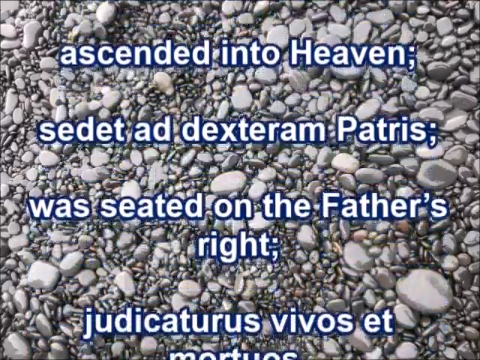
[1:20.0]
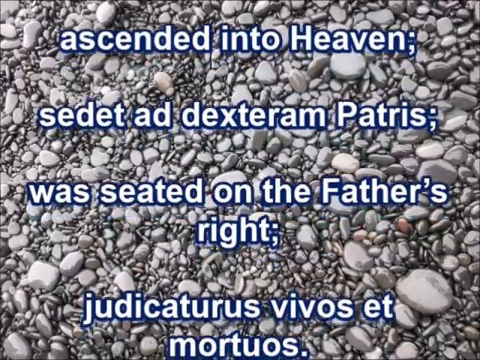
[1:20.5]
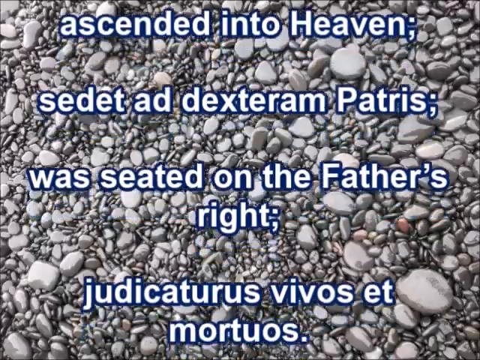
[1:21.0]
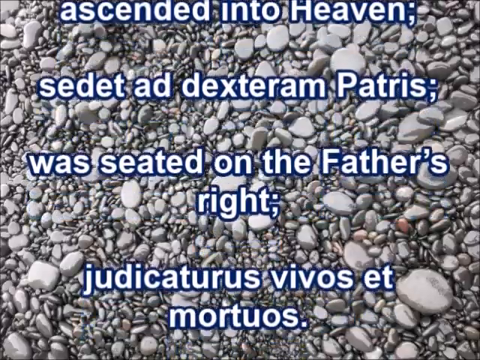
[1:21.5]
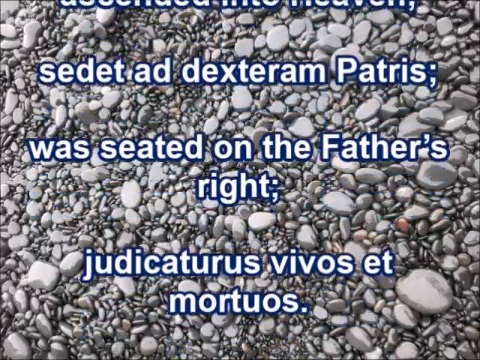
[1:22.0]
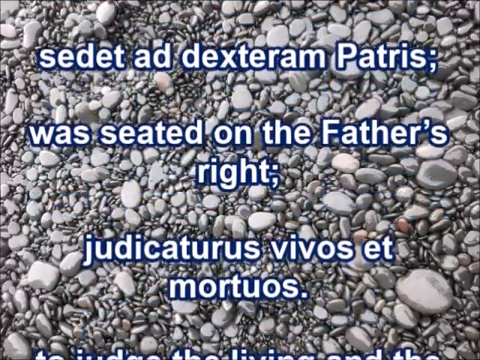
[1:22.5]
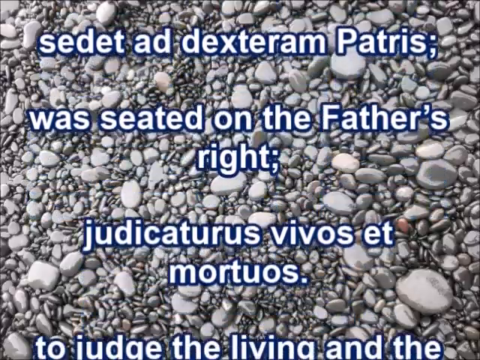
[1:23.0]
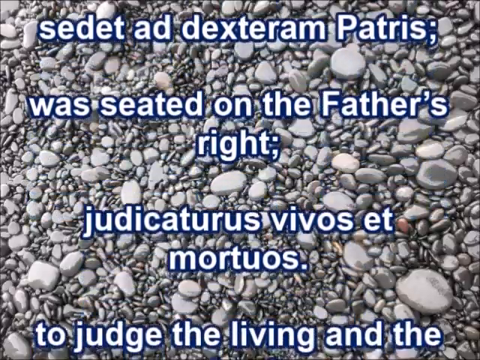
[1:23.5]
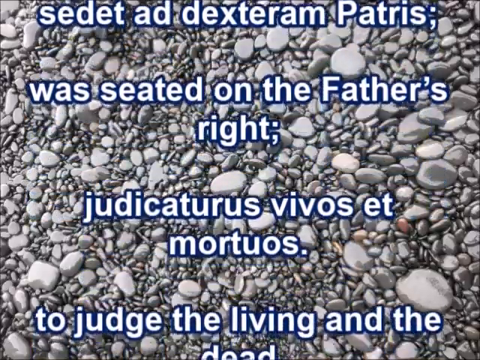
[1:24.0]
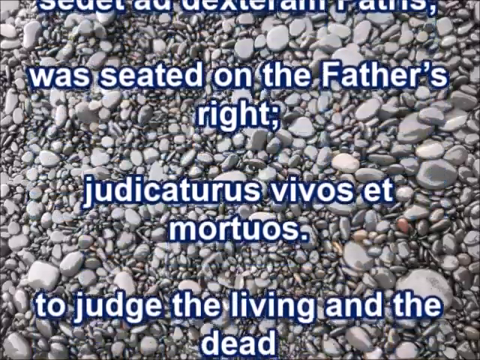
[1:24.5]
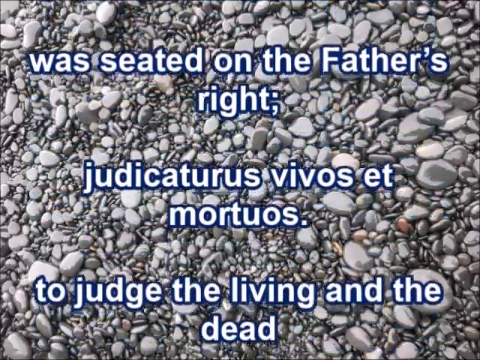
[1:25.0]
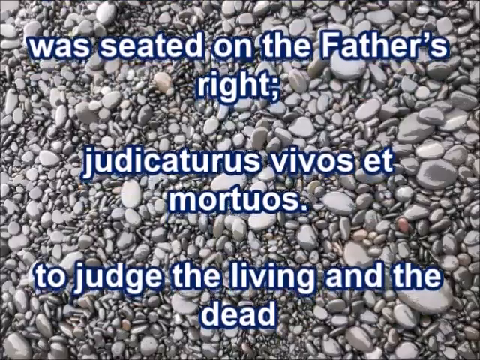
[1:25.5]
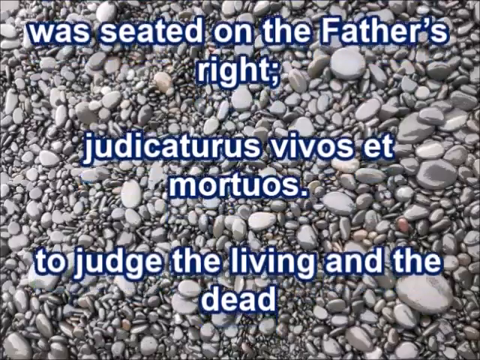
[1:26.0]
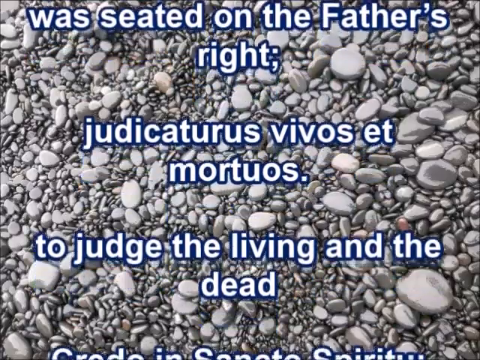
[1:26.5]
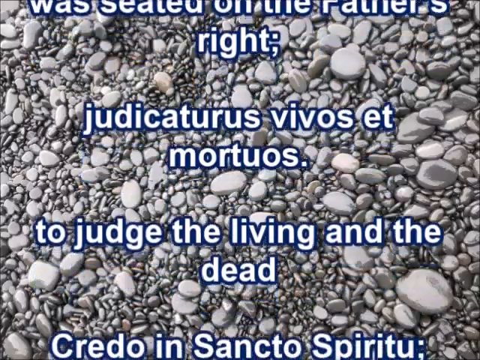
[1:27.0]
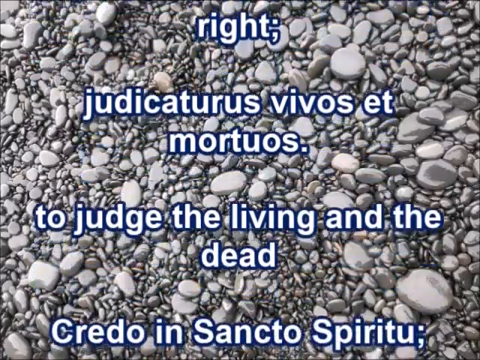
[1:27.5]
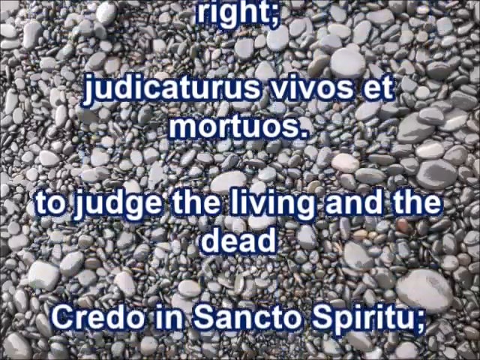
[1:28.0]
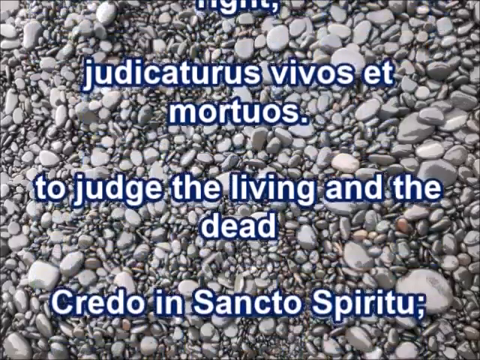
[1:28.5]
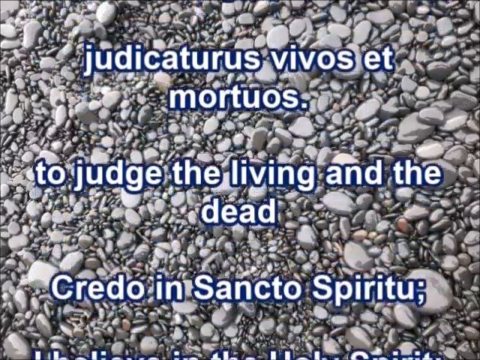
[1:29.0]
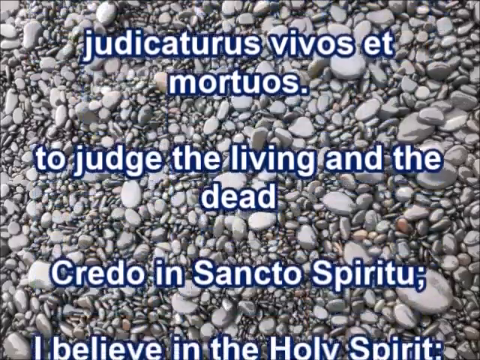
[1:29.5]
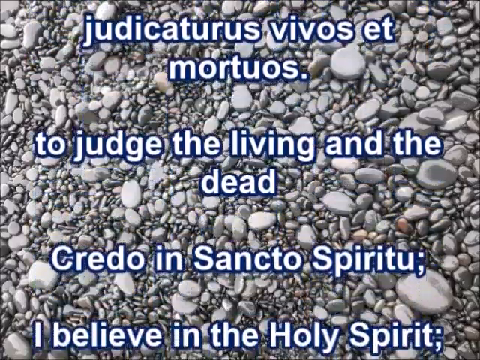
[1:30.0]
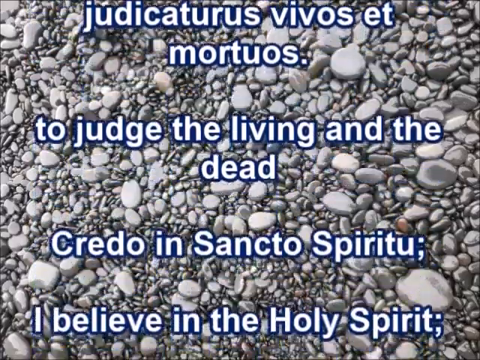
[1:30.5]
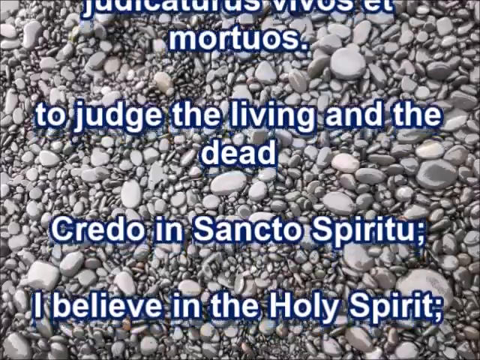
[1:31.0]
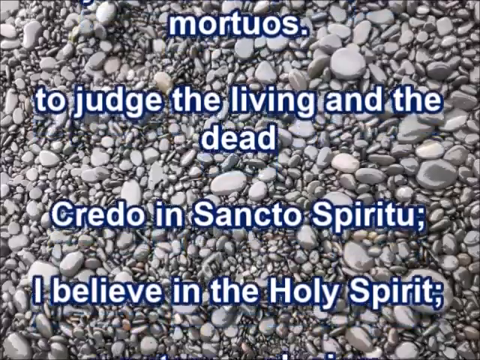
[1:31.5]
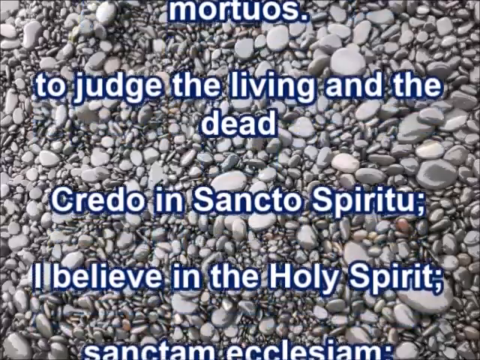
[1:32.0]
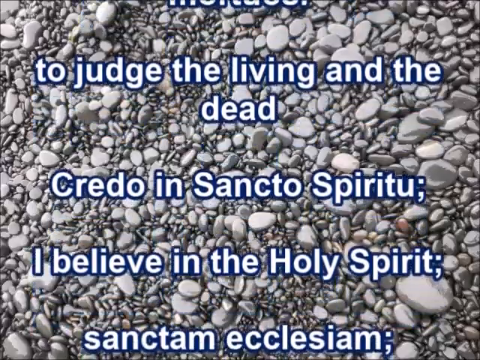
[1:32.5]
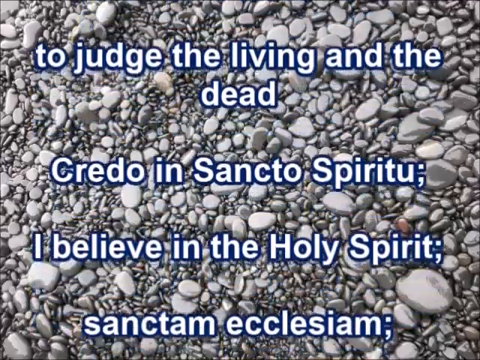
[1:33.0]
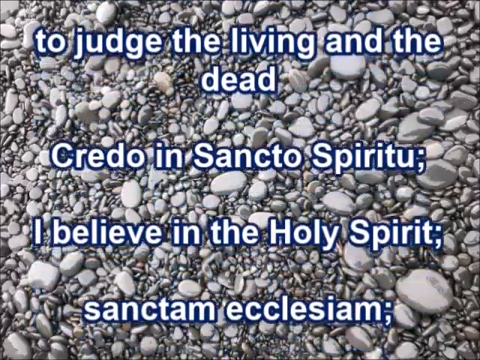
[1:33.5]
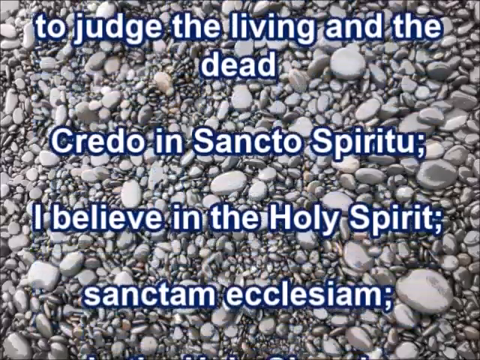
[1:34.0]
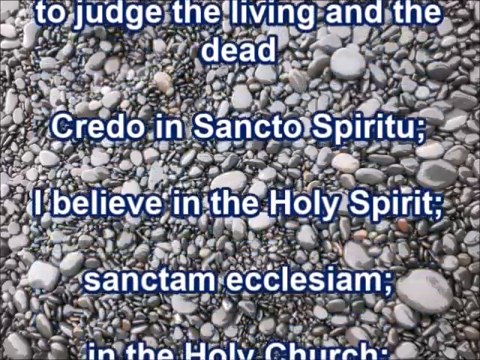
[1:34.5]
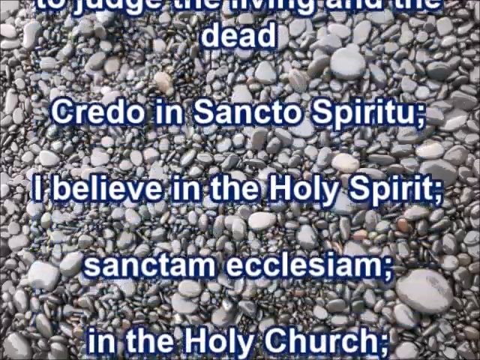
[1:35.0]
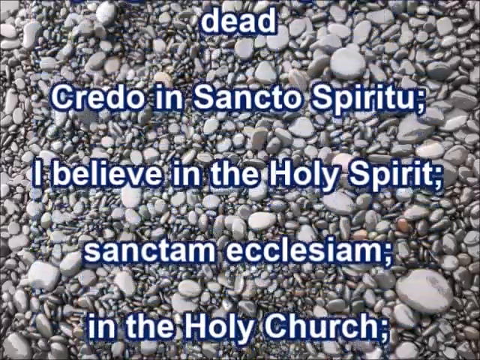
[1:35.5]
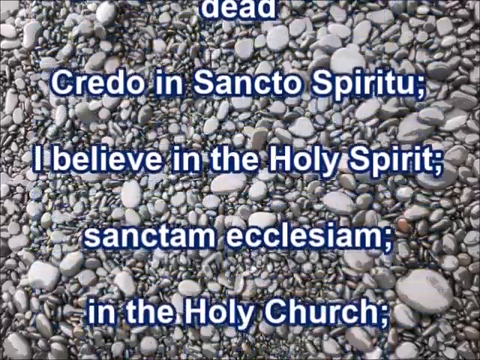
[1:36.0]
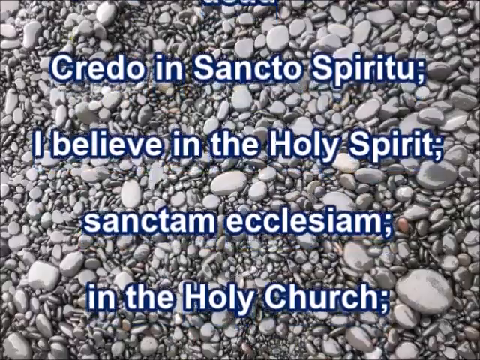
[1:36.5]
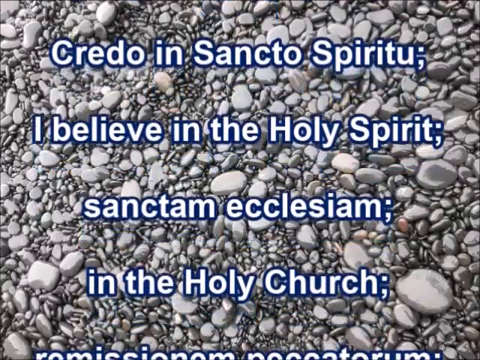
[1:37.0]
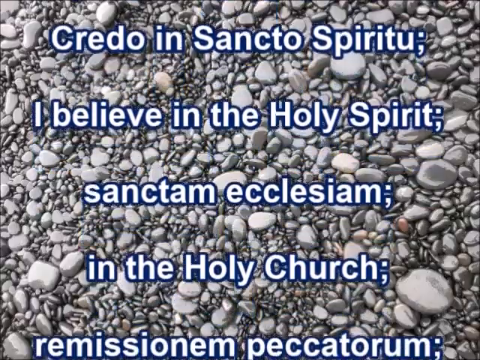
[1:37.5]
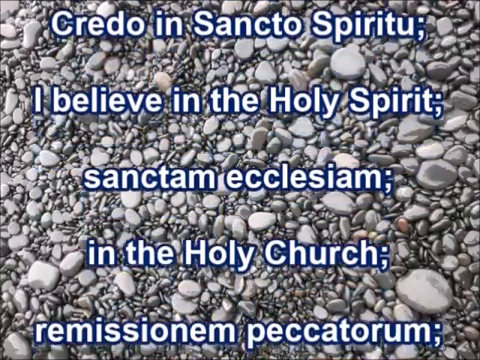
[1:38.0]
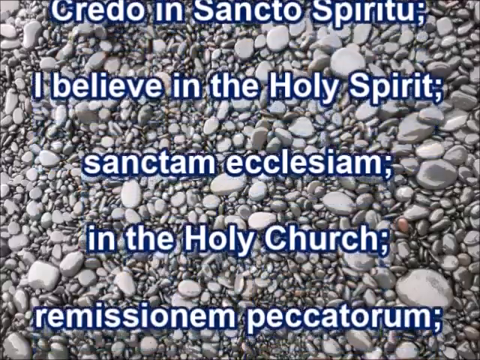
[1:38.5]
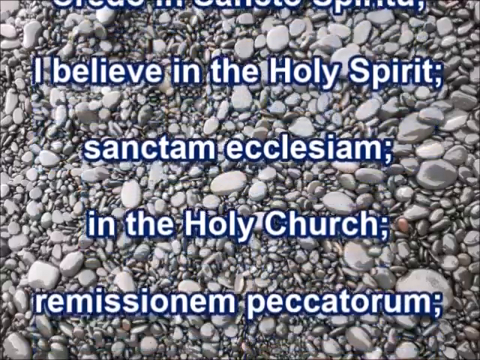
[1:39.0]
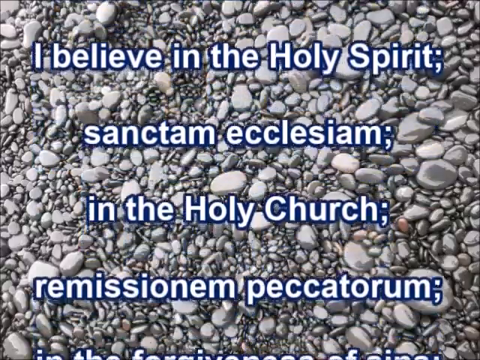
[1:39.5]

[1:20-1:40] The text continues in the same way: "to judge the living and the dead," followed by the Italian version; "I believe in the holy spirit," followed by the Italian; and "in the holy church." Everything else stays the same, including the background, and then the text cuts off.